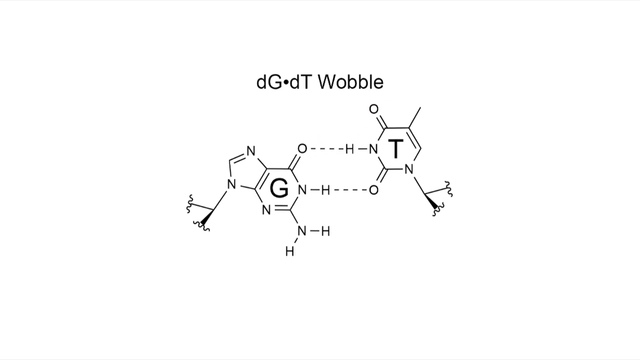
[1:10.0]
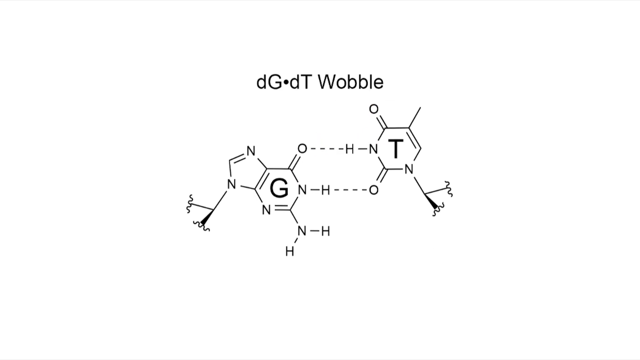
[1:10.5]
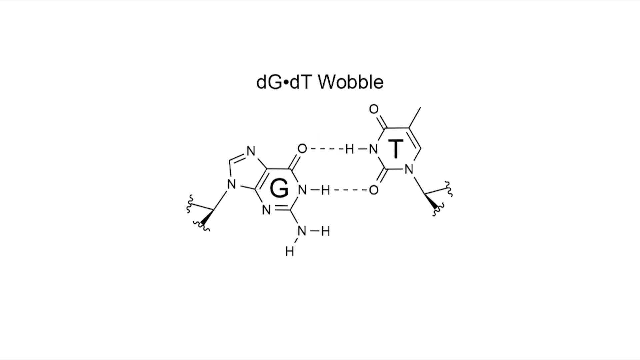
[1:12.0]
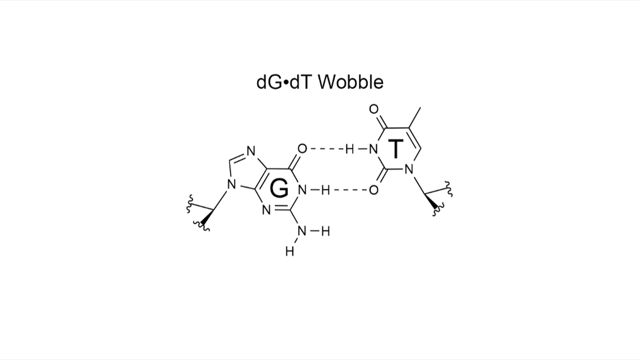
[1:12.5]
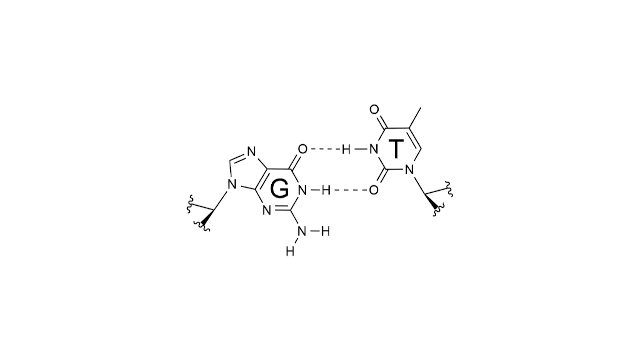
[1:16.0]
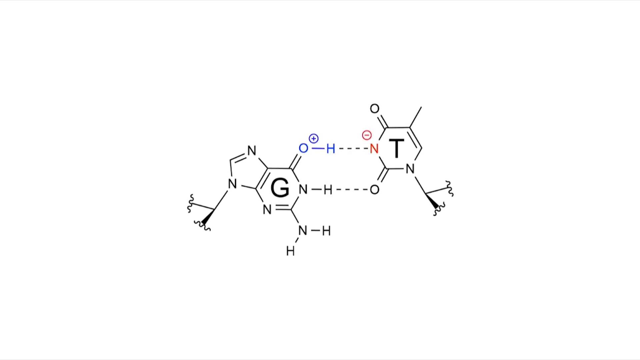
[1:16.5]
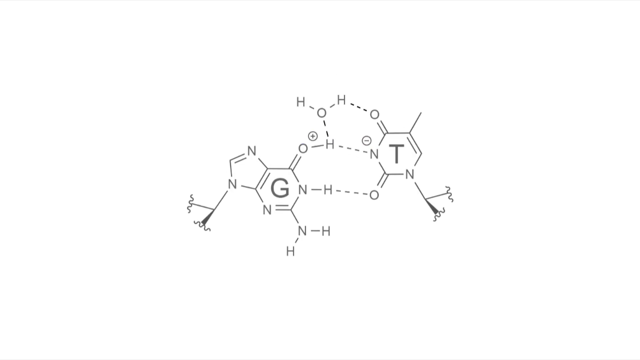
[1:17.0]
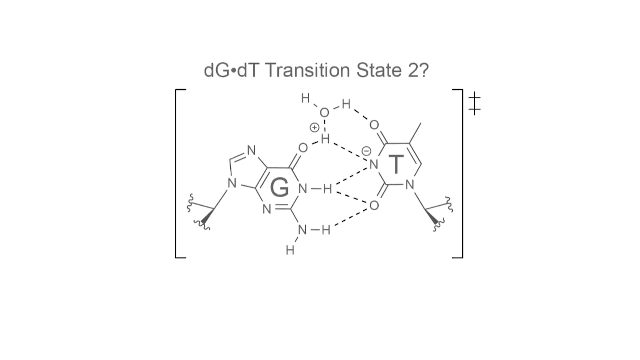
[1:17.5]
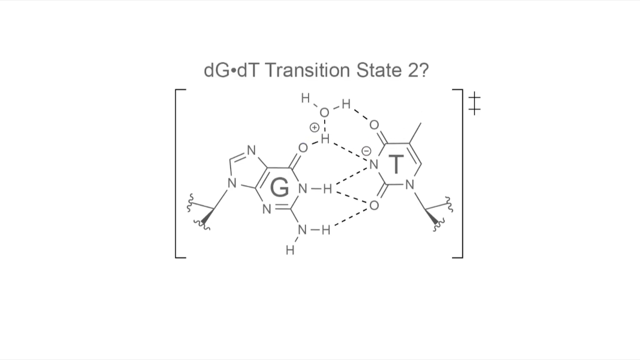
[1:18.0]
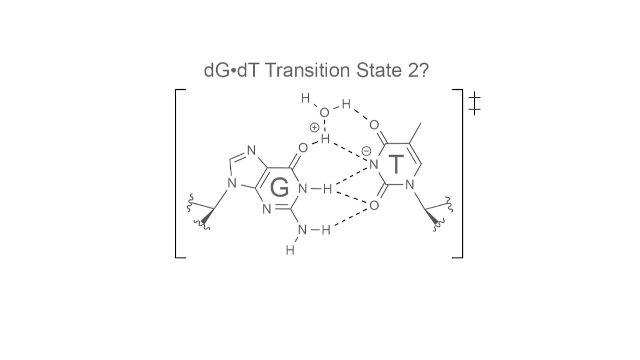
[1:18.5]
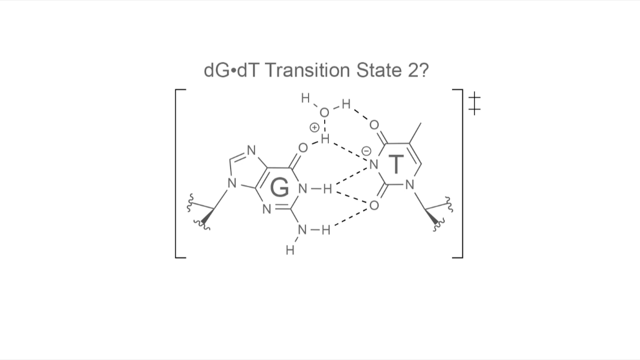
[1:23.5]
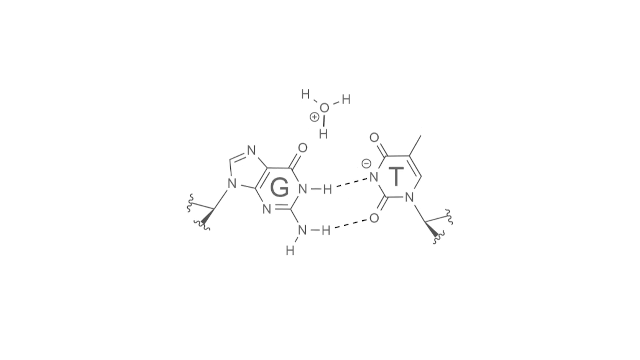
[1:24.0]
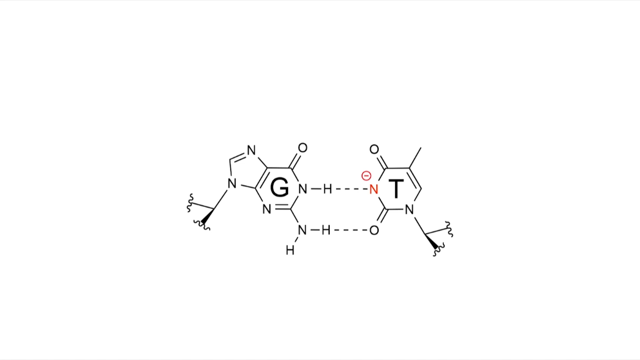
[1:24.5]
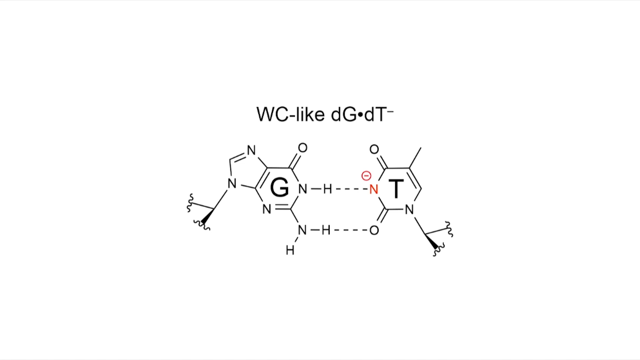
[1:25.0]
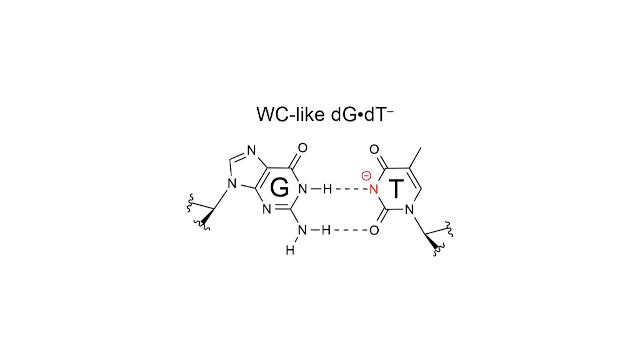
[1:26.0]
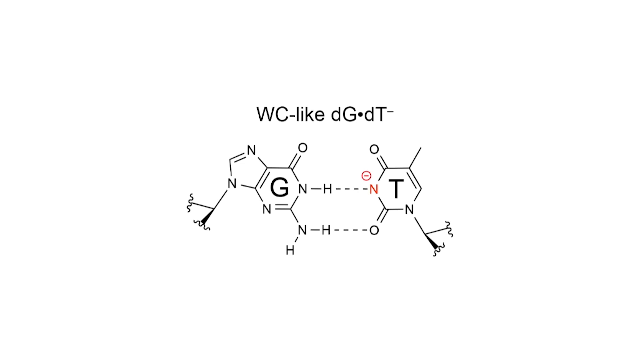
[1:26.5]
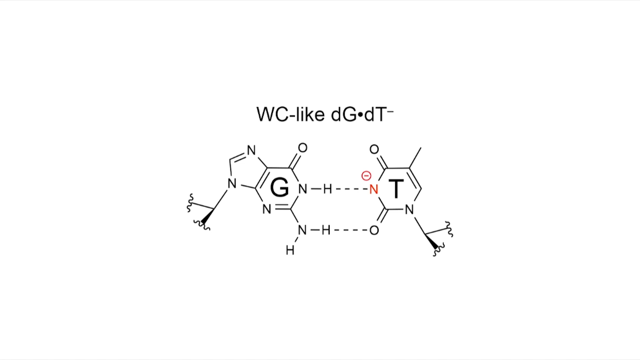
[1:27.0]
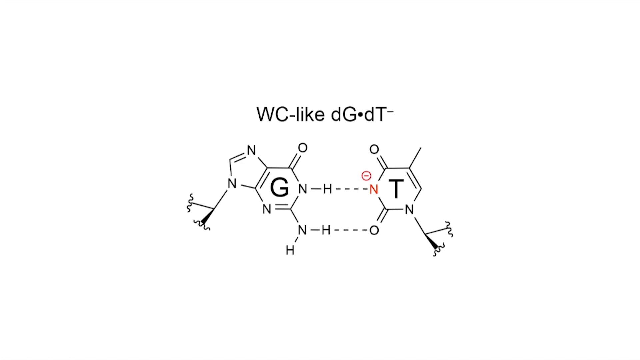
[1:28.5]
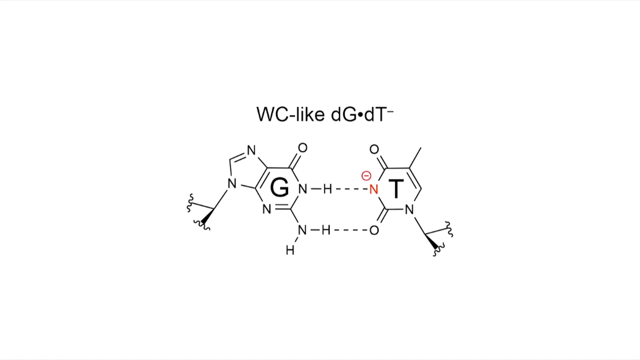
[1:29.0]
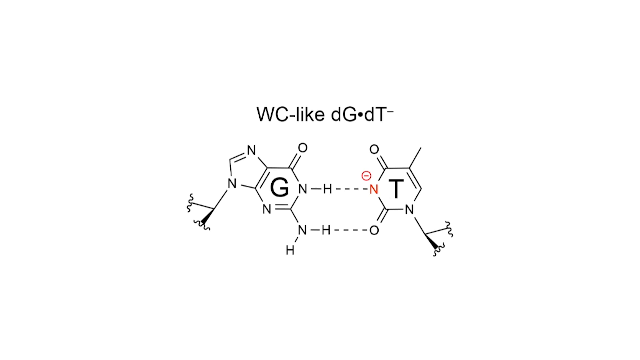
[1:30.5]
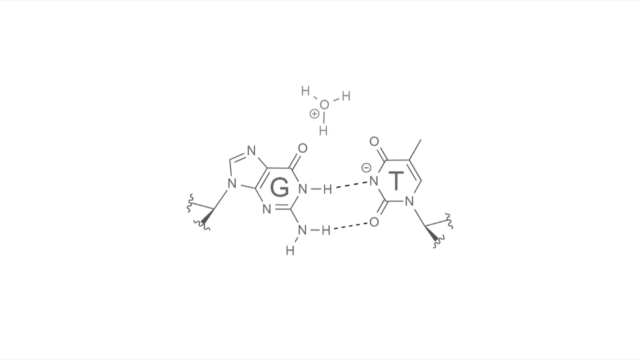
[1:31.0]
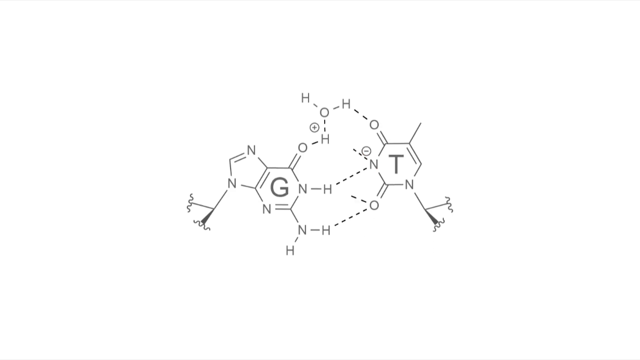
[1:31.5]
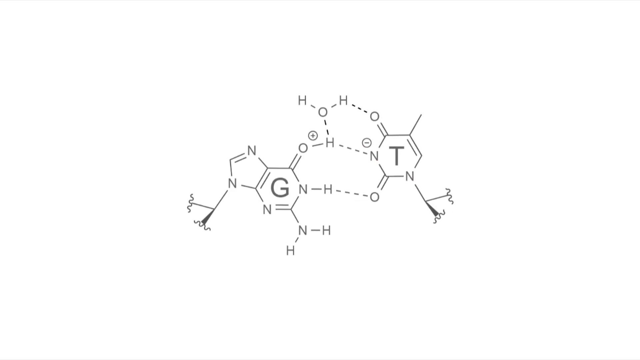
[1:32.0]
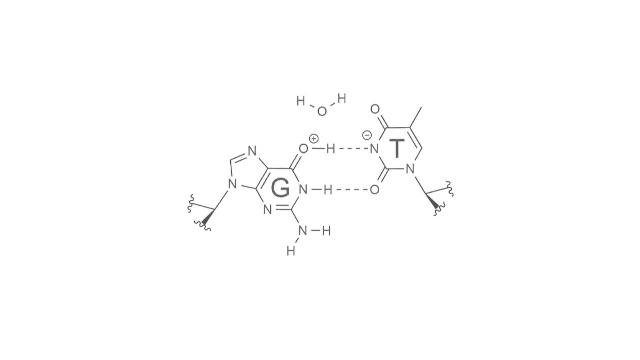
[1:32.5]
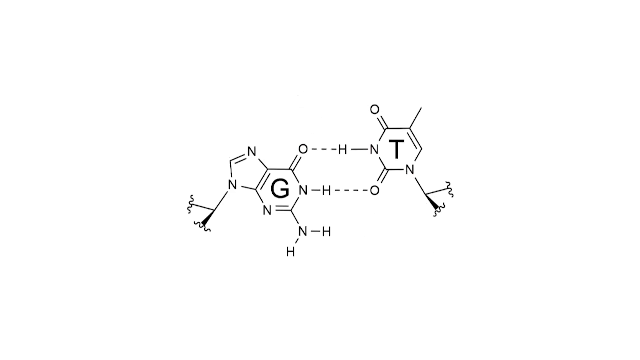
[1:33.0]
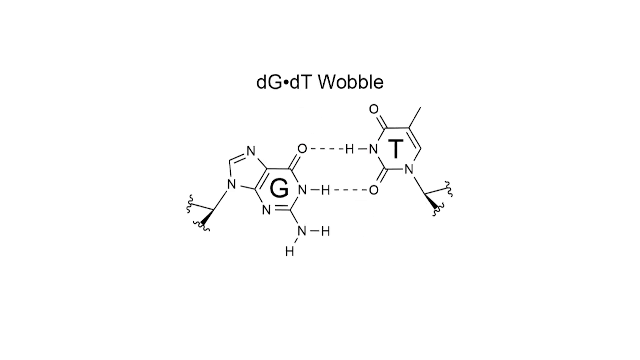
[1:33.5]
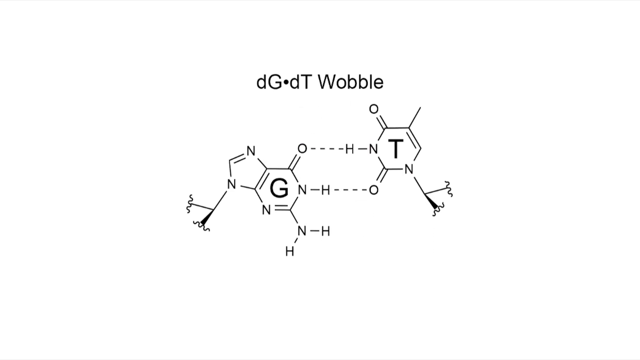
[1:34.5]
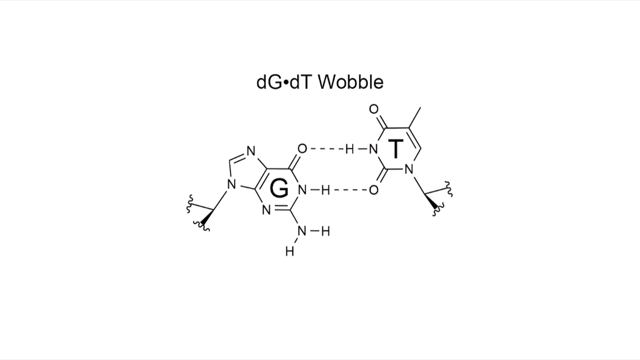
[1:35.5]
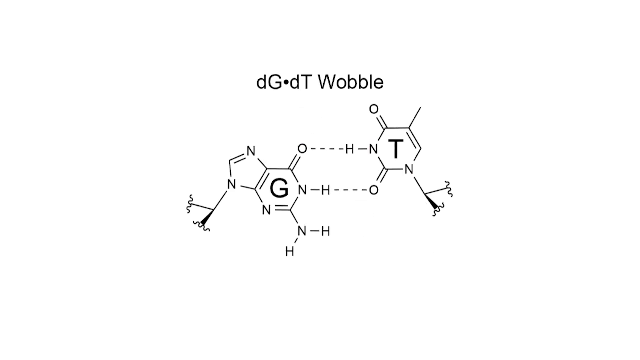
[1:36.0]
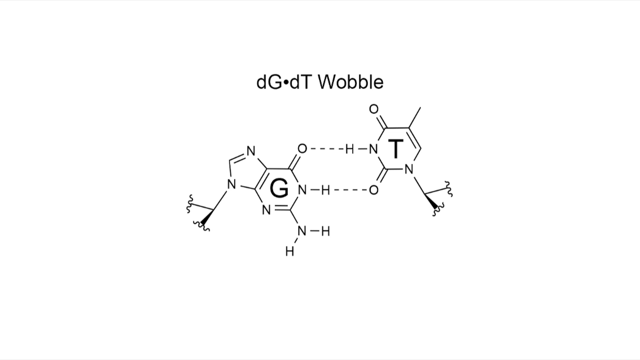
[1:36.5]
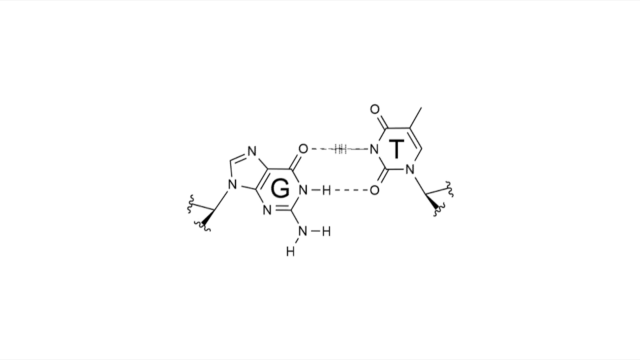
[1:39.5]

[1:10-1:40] The molecular structure keeps changing, and the dG-dT transition state two appears. A number of elements have shifted position and are connected differently, and the electrolyte changes from positive to negative, with some now neutral. The letters G and T stay fixed, while oxygen, hydrogen and nitrogen switch positions, forming different molecules and structural formulas. As they move, the bond representation changes: oxygen has double bonds and hydrogen single bonds. The elements also pair differently, with oxygen paired to hydrogen and nitrogen, and then oxygen paired to hydrogen on the top, hydrogen on the right and hydrogen on the bottom, apparently bonded three times.